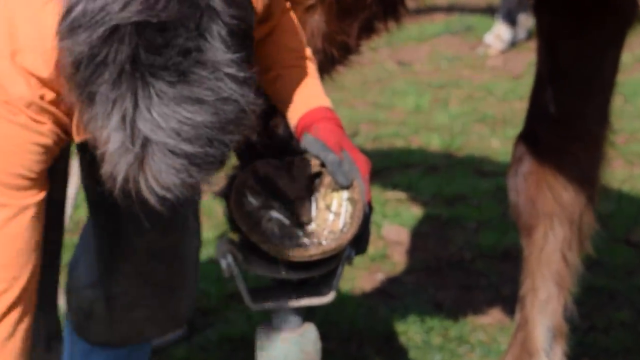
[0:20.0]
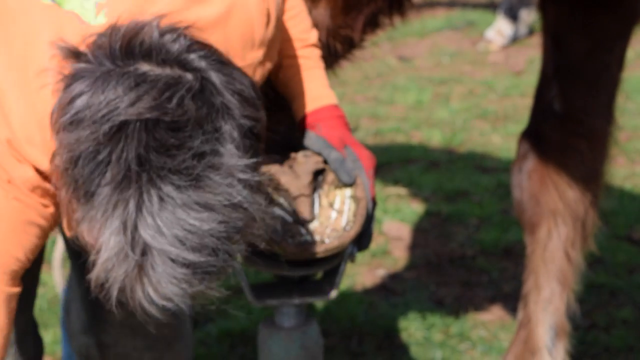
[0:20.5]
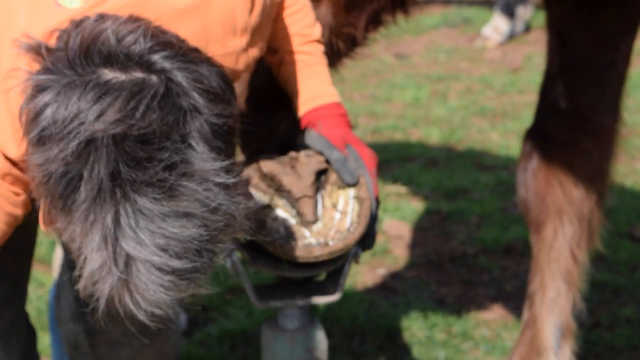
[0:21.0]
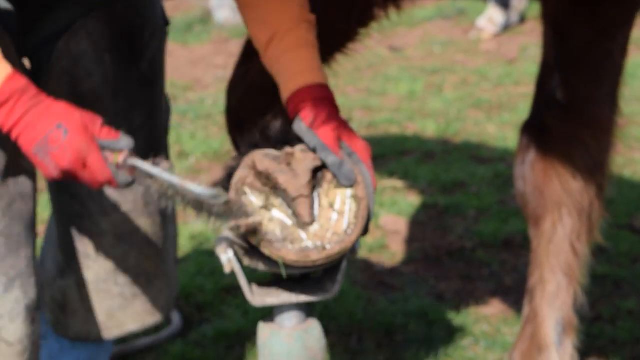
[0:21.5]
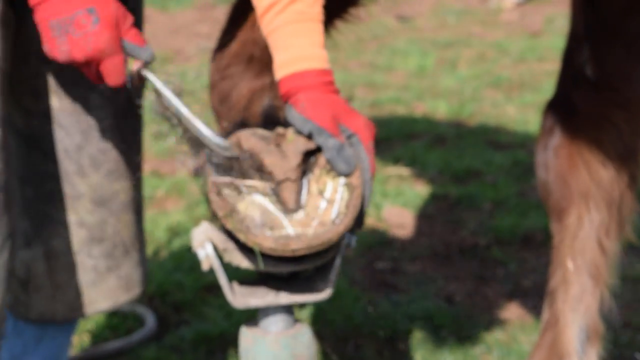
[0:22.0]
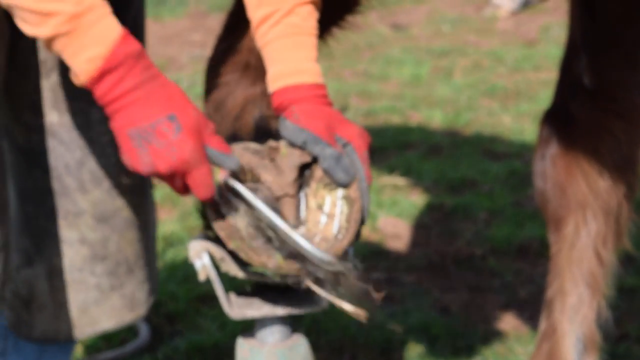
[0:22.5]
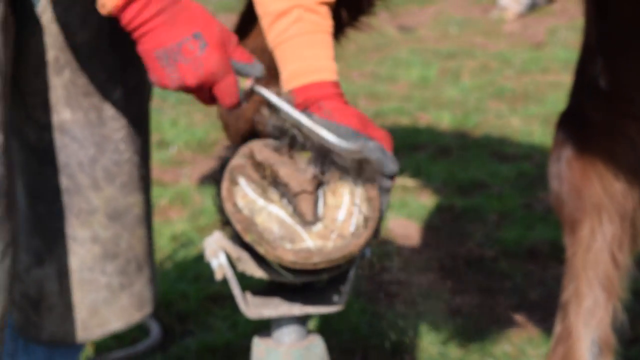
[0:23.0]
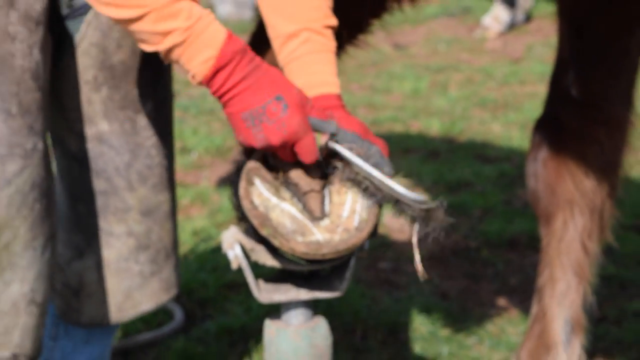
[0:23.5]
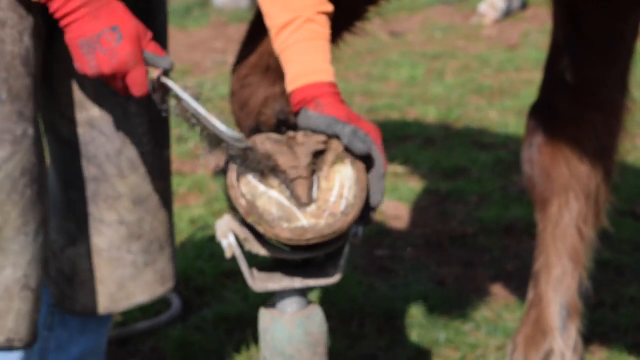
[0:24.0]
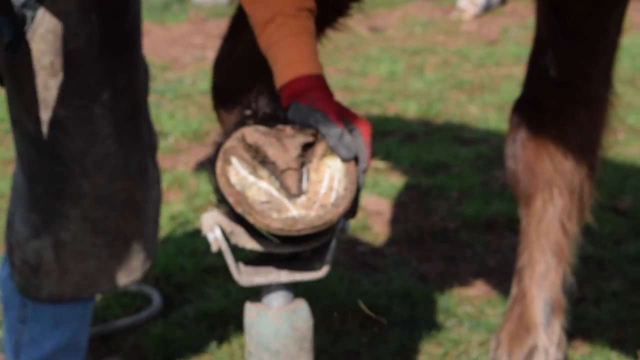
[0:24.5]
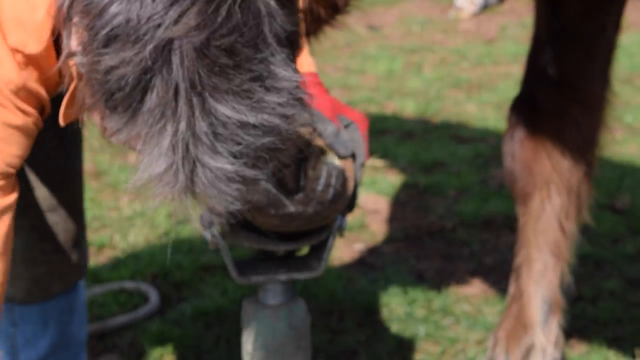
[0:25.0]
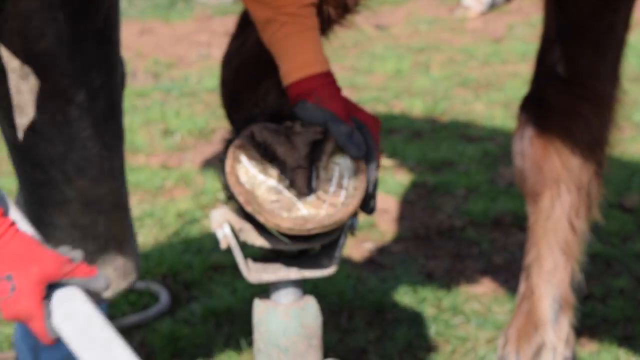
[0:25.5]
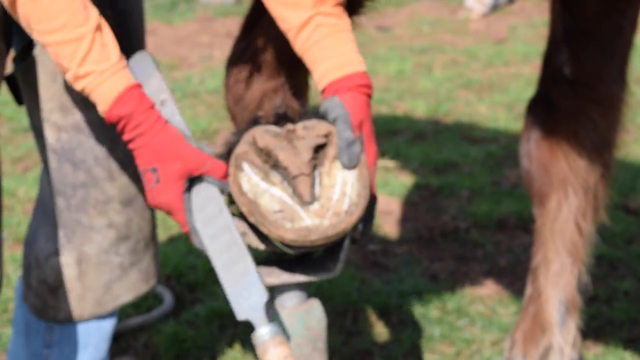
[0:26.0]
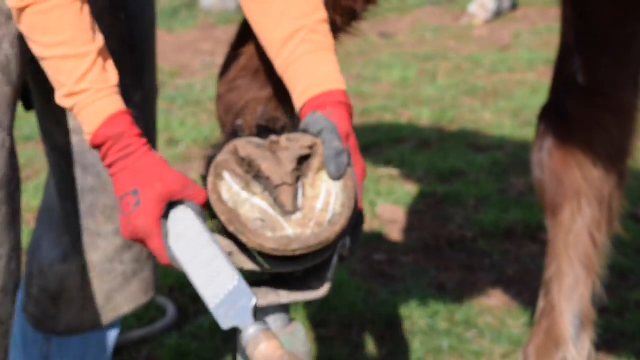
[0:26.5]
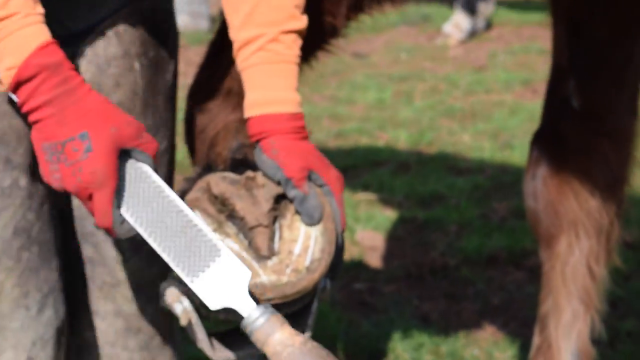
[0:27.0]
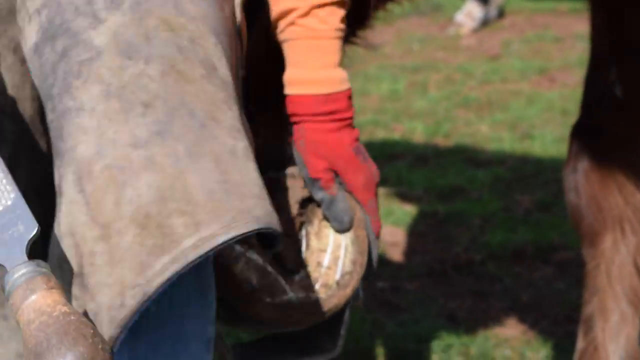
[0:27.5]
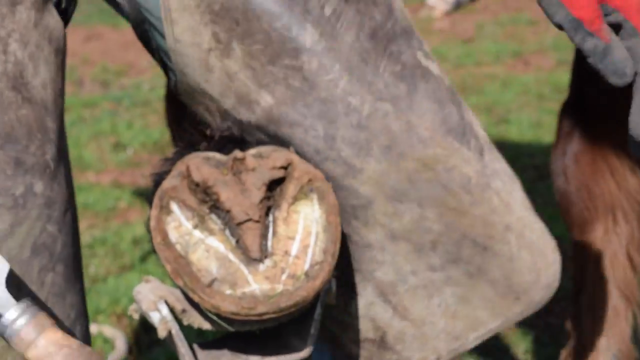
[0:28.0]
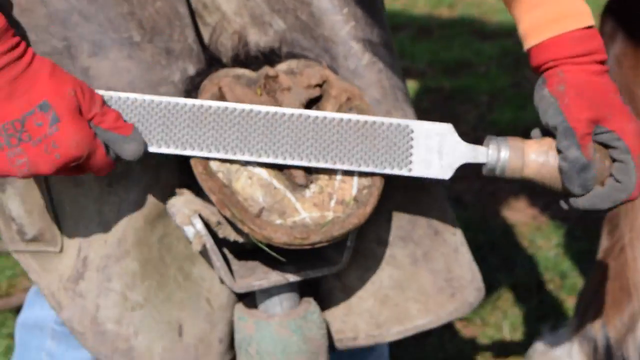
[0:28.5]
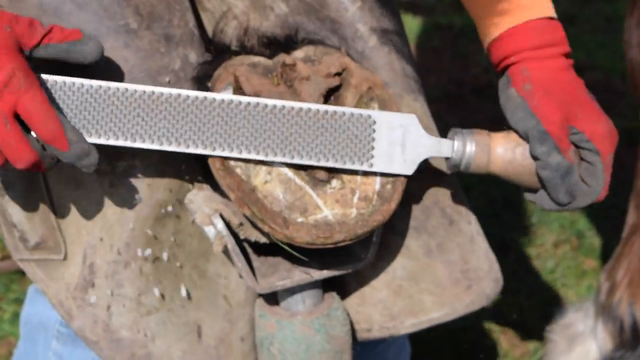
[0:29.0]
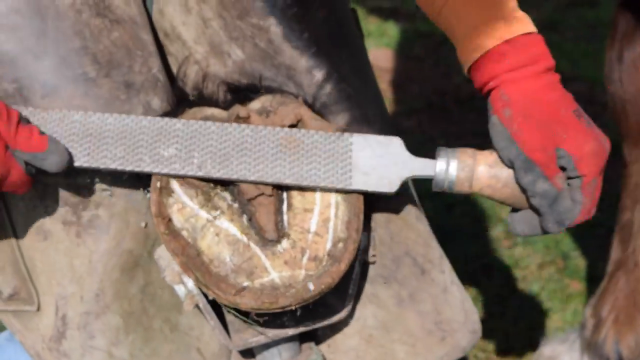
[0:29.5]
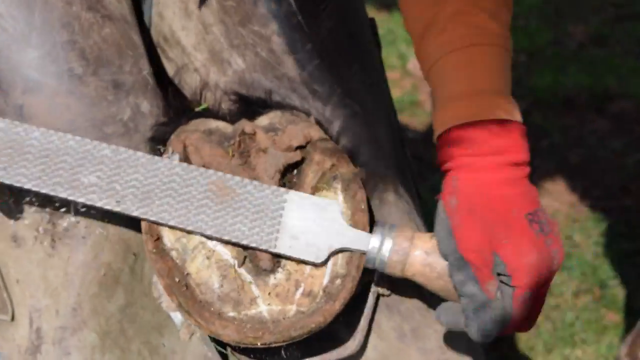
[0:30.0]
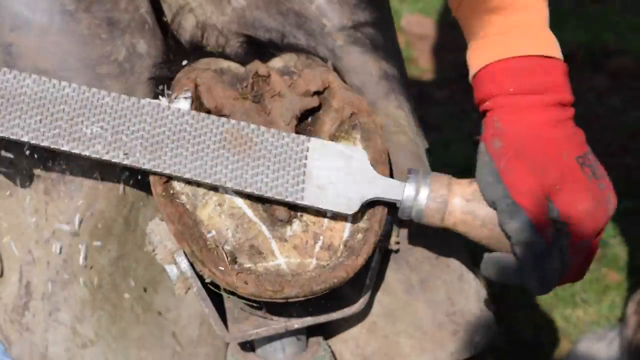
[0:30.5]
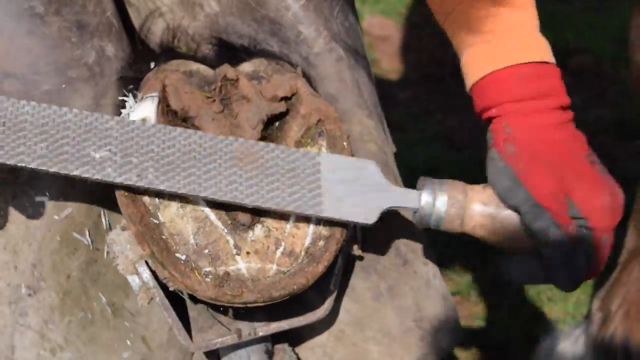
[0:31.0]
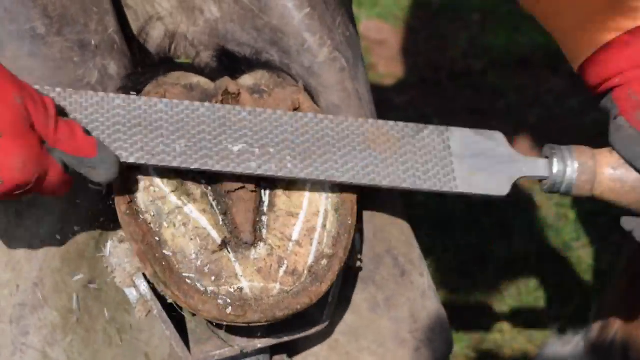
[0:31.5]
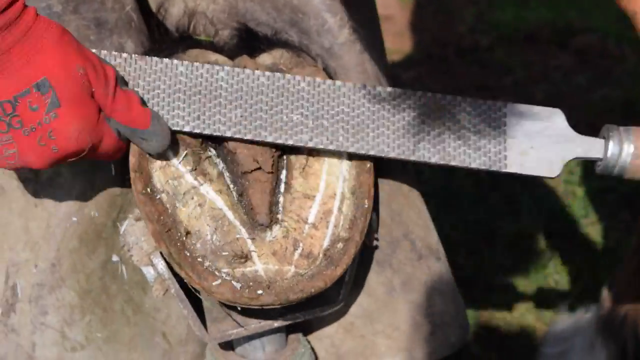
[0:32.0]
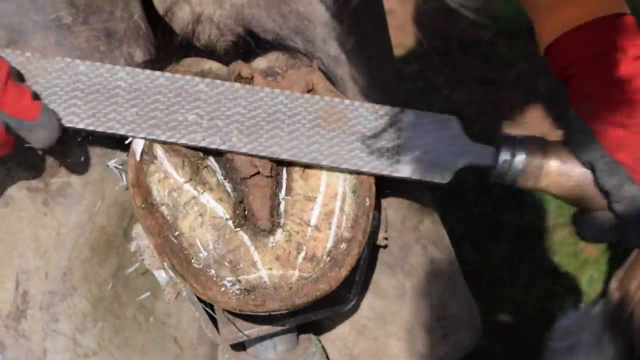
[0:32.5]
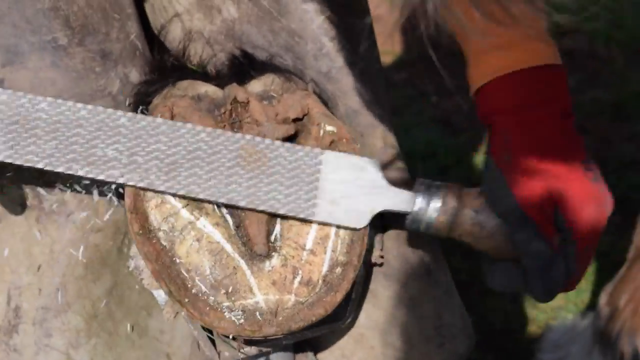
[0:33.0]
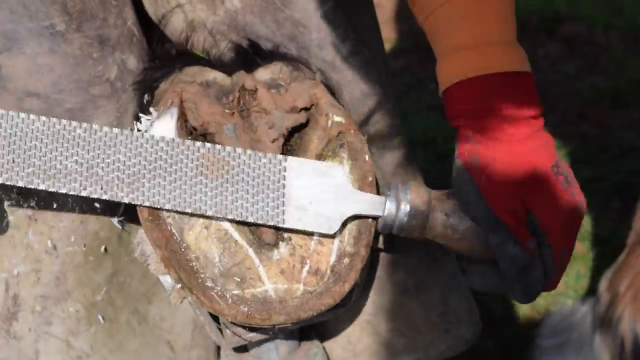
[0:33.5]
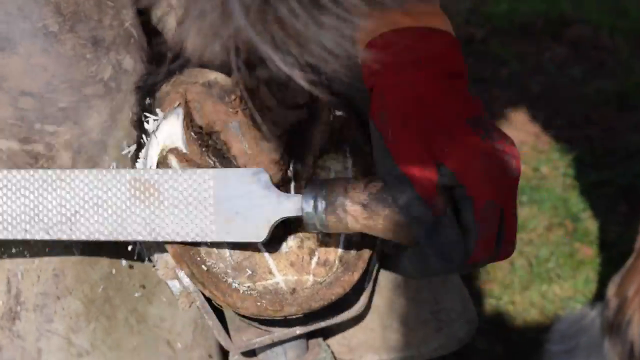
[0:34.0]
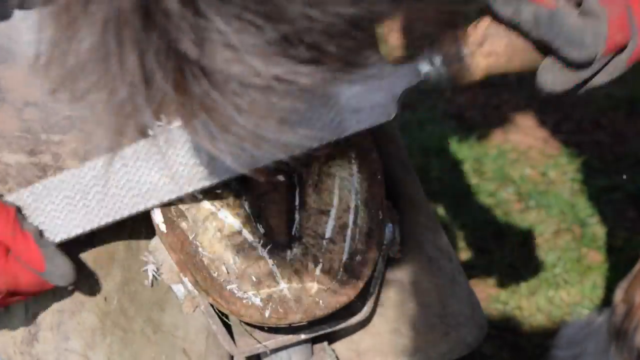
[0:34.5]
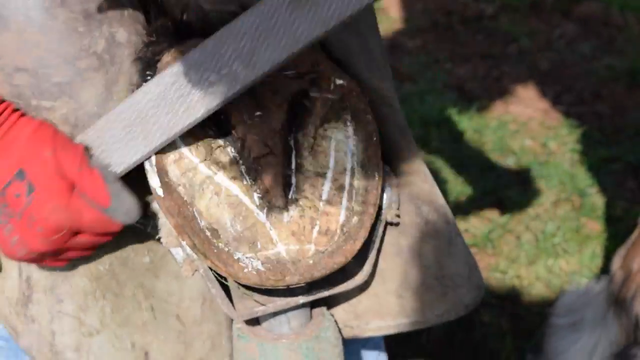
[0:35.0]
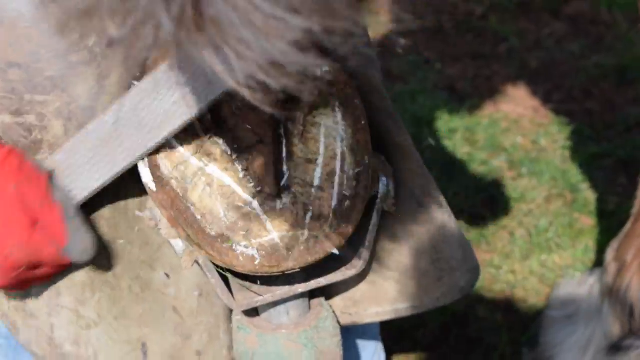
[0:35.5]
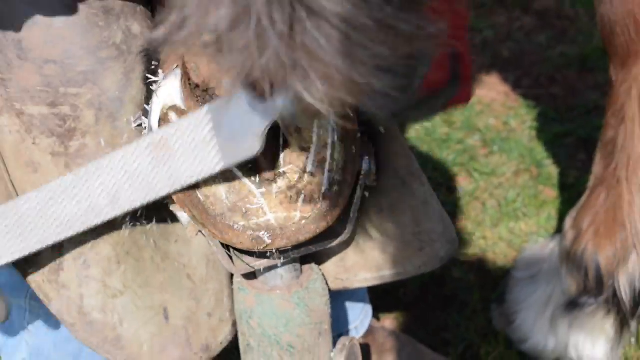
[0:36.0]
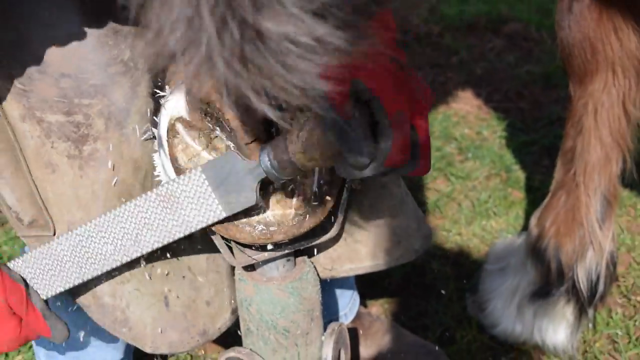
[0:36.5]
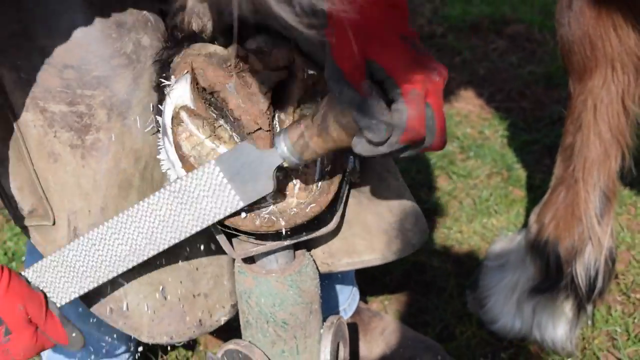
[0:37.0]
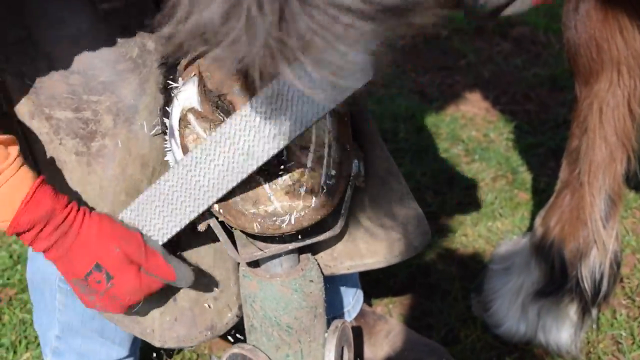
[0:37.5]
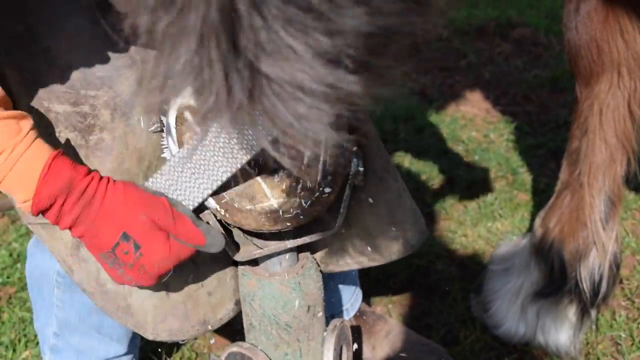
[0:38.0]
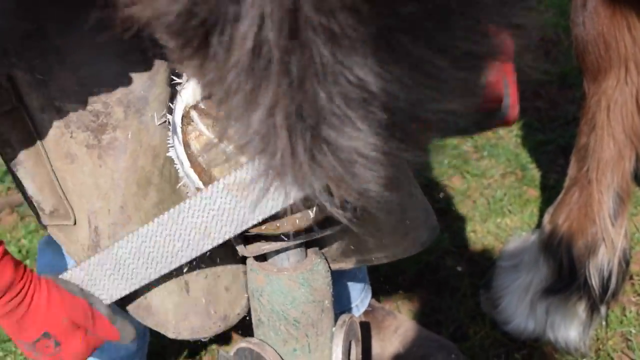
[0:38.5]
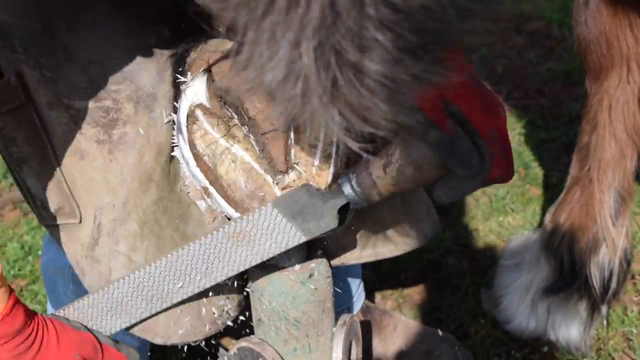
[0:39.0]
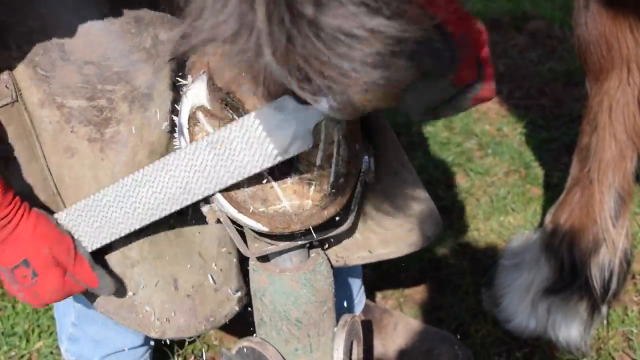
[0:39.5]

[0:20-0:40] She takes another tool that looks like a brush and quickly brushes the hoof off, with dust flying through the air. Then she grabs another tool that looks like a big metal file, a grater-like file. With the horse's hoof bent up, she puts it between her legs; it is on a sturdy metal post. She files all around the edge of the hoof, and the hoof goes from black or brown to white as she shaves off the outer layer. Her shadow moves in the background as she files. The grass is green, with some dirt patches underneath the horse and her. The back horse's leg is visible; it has longer fur or hair, and its foot has white markings as well.